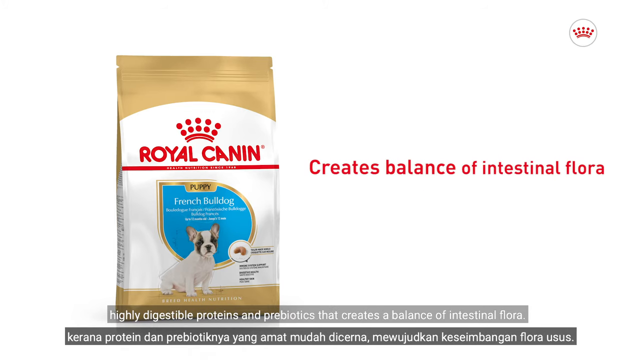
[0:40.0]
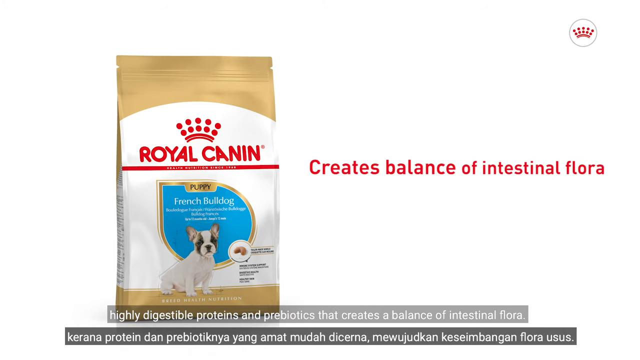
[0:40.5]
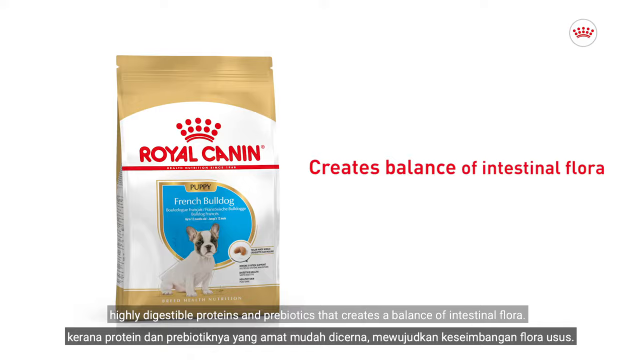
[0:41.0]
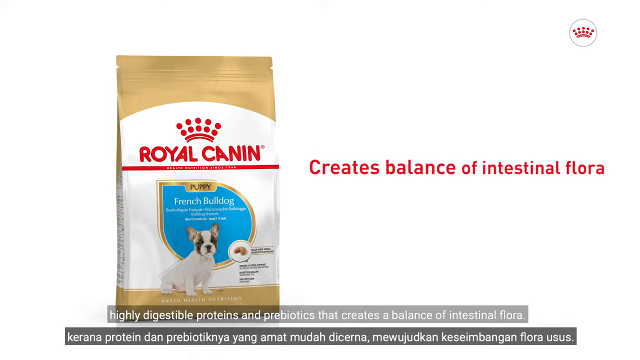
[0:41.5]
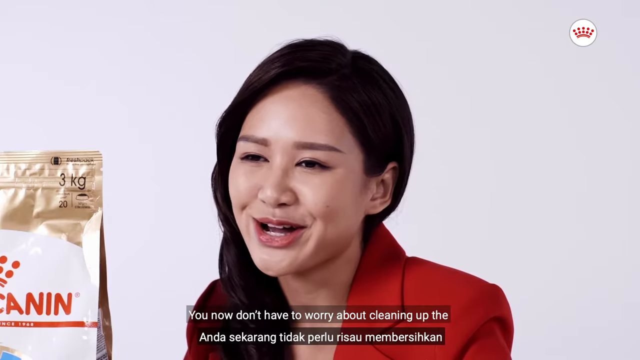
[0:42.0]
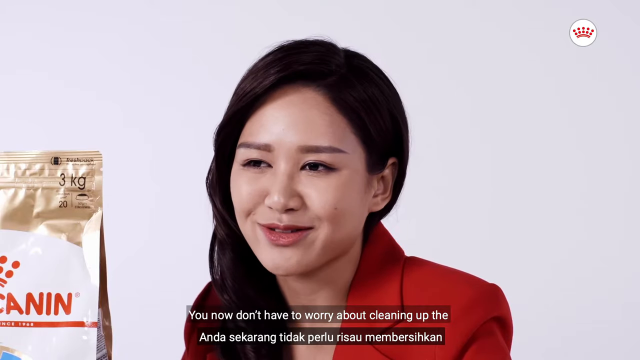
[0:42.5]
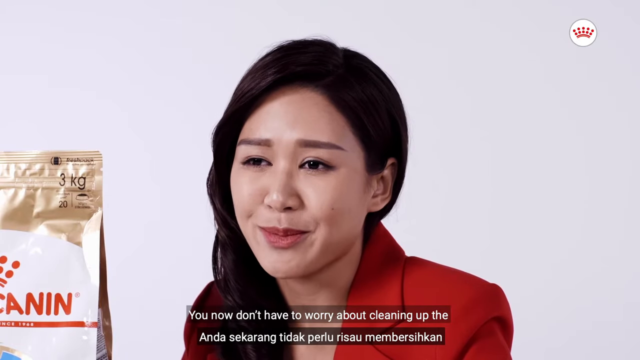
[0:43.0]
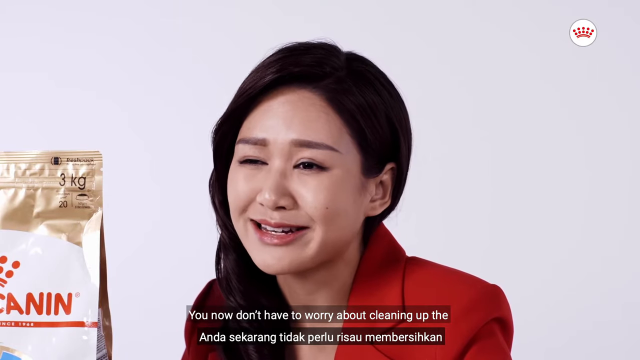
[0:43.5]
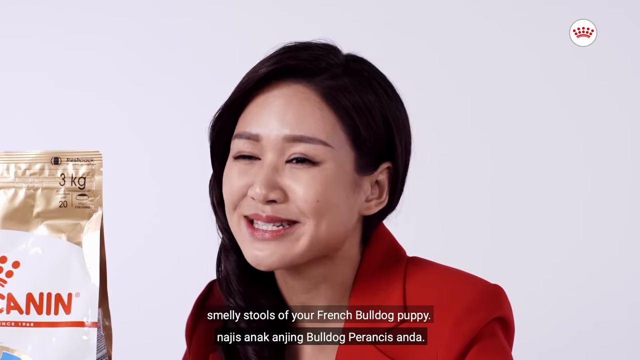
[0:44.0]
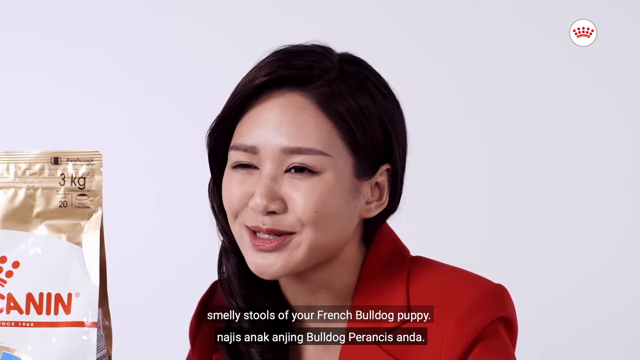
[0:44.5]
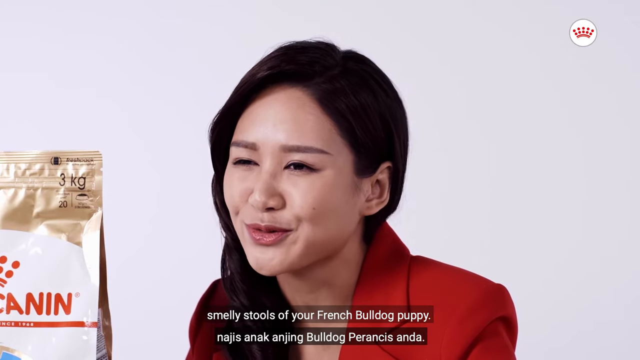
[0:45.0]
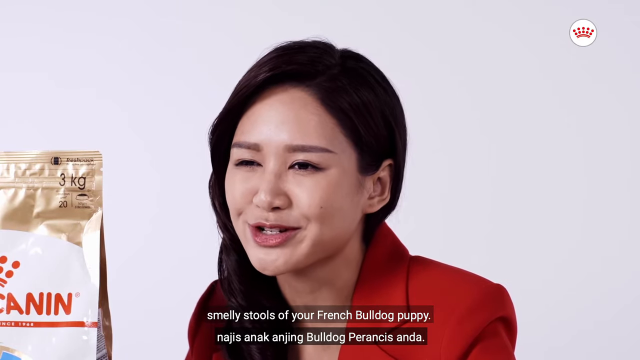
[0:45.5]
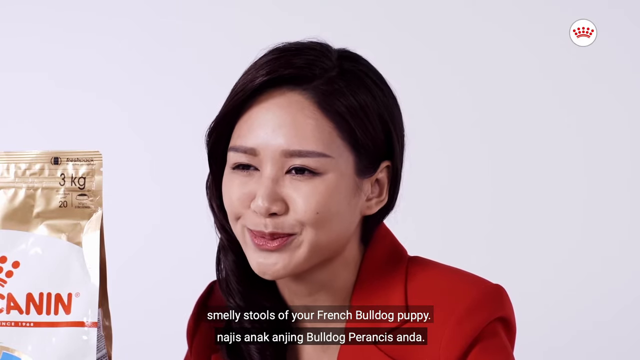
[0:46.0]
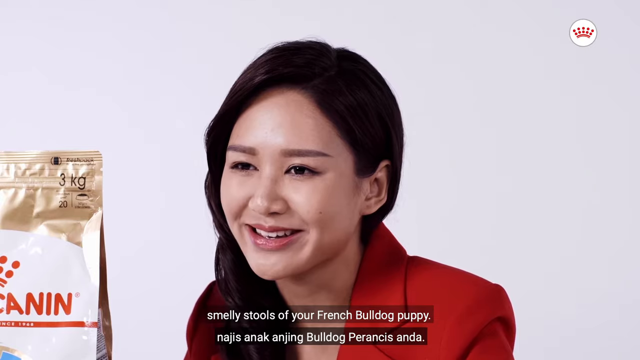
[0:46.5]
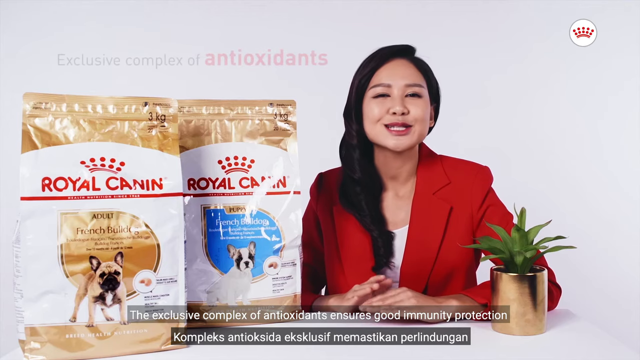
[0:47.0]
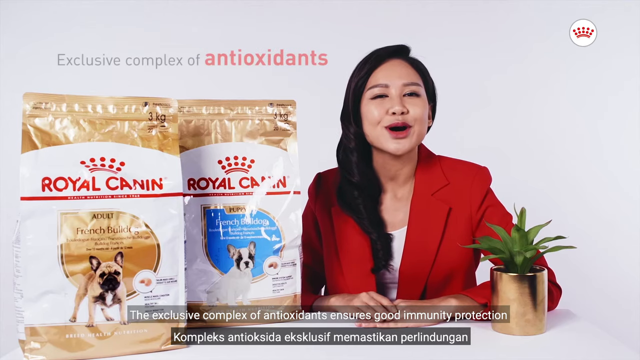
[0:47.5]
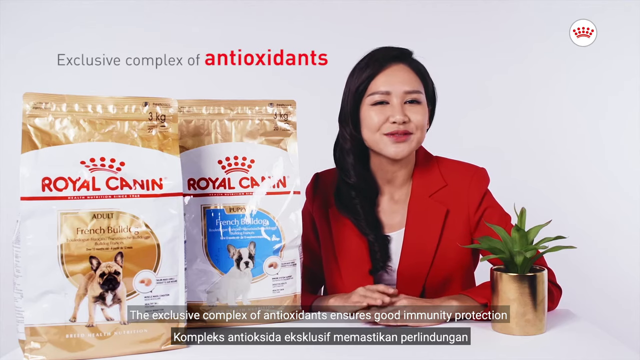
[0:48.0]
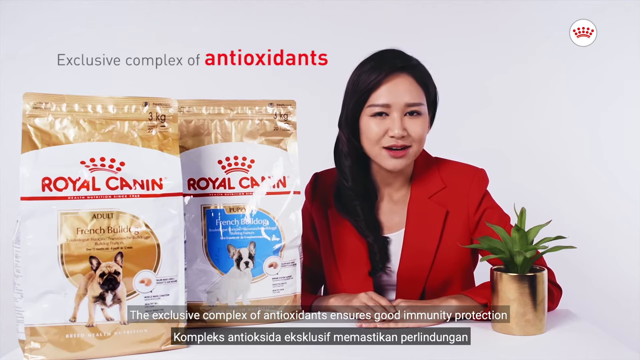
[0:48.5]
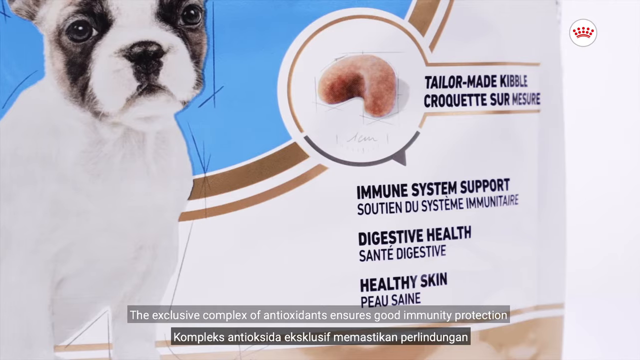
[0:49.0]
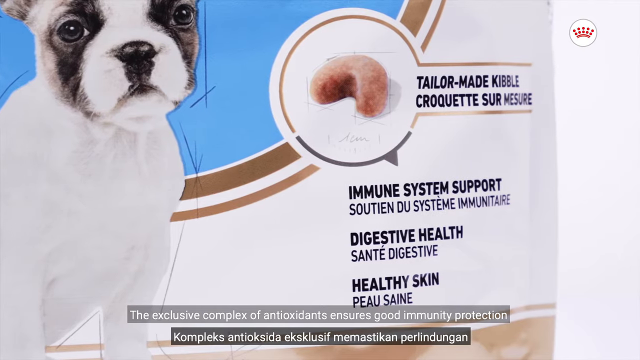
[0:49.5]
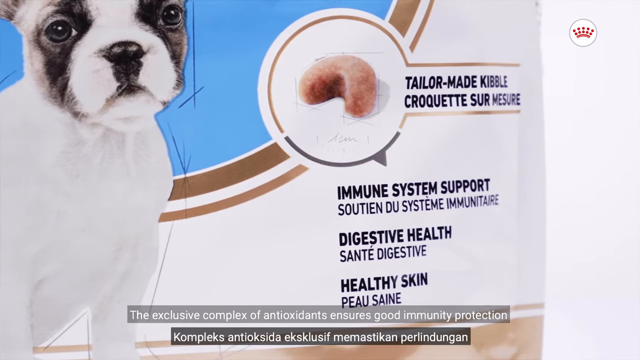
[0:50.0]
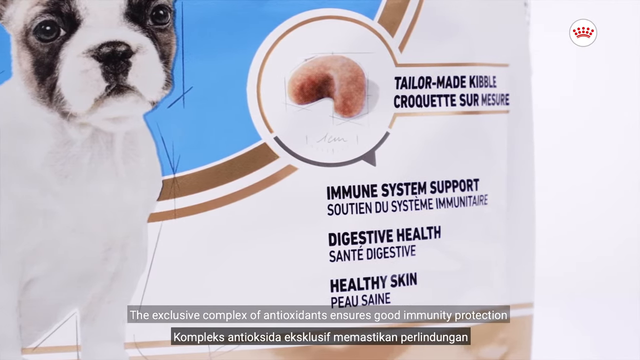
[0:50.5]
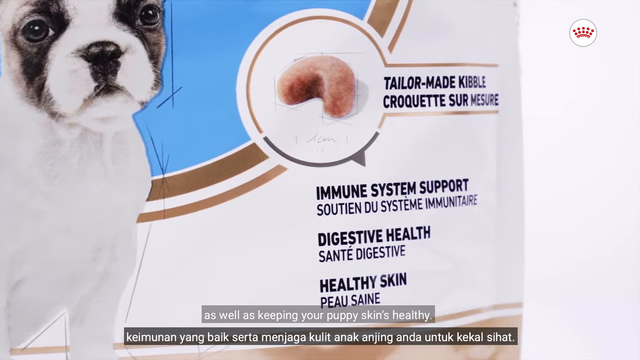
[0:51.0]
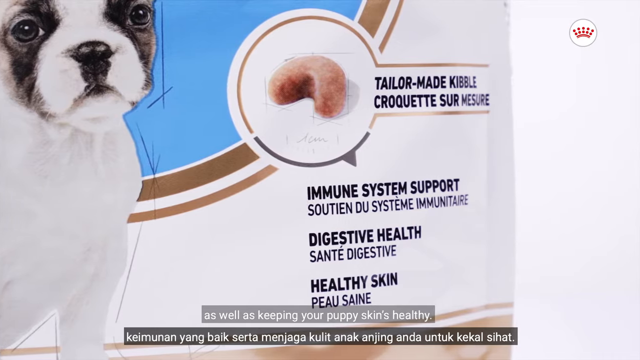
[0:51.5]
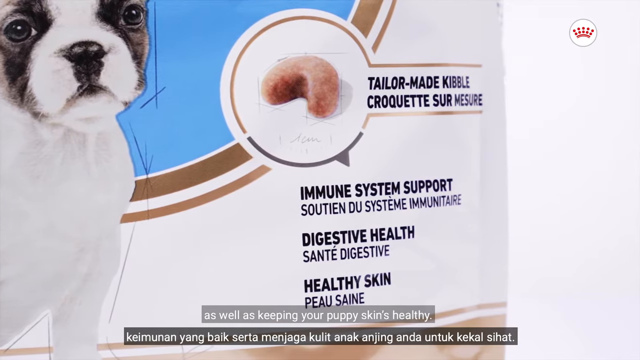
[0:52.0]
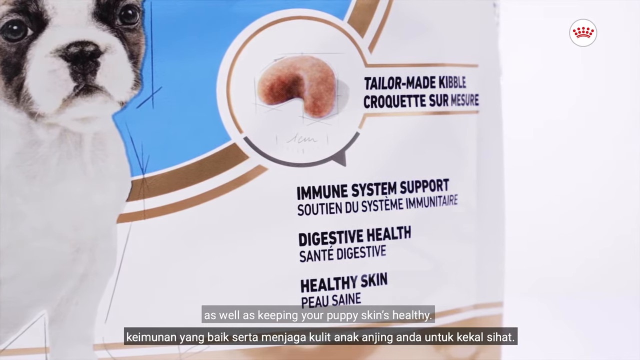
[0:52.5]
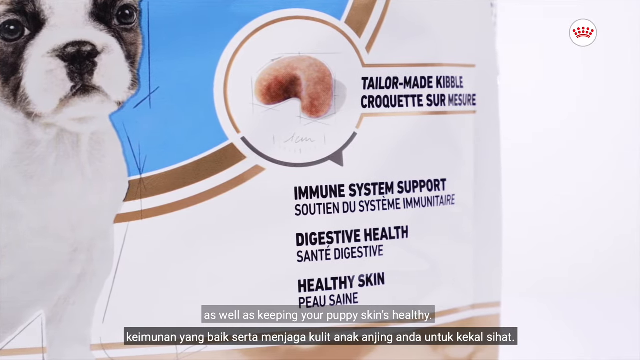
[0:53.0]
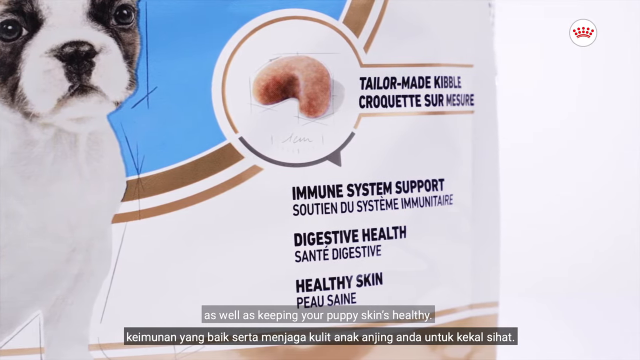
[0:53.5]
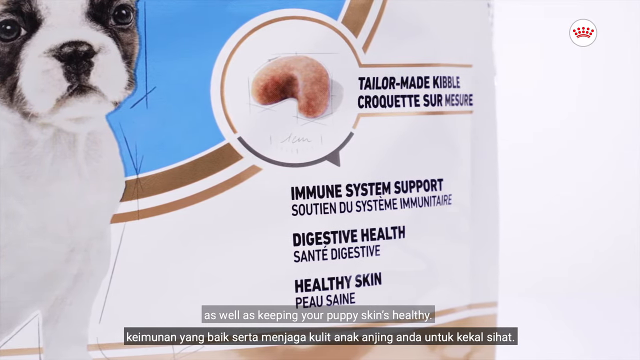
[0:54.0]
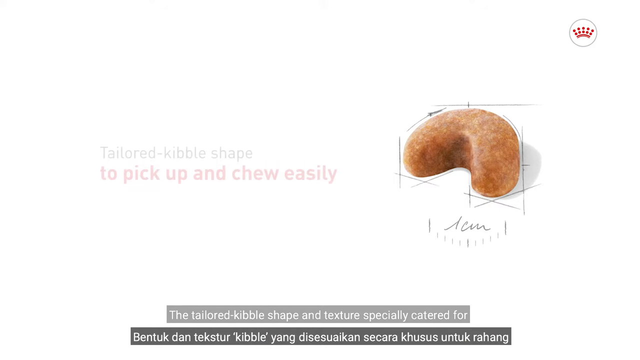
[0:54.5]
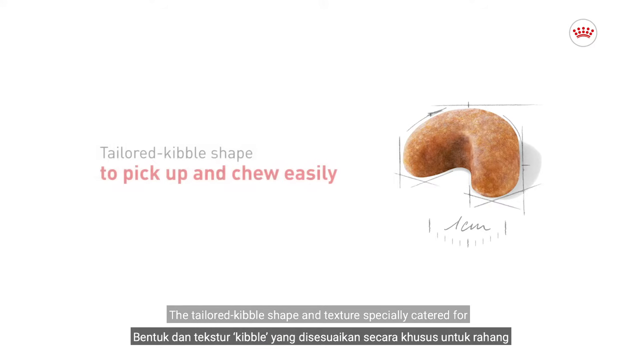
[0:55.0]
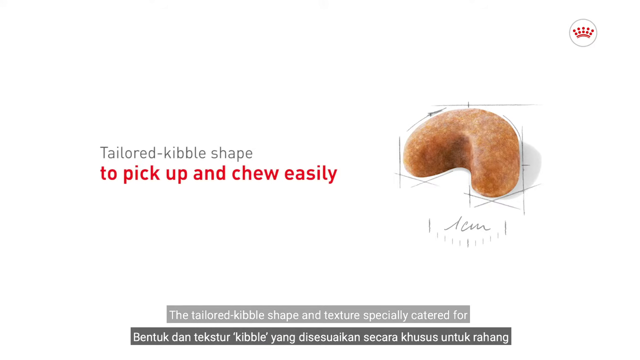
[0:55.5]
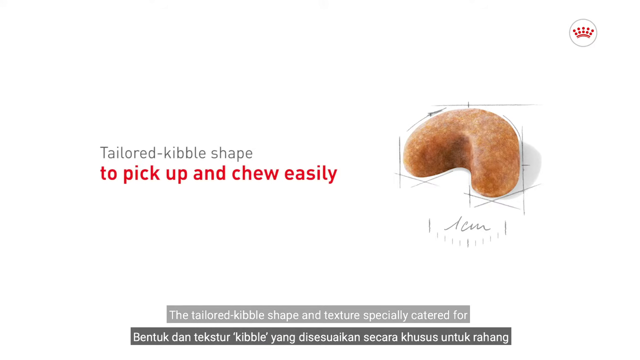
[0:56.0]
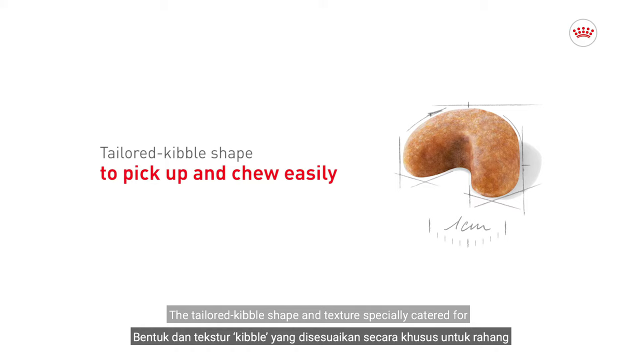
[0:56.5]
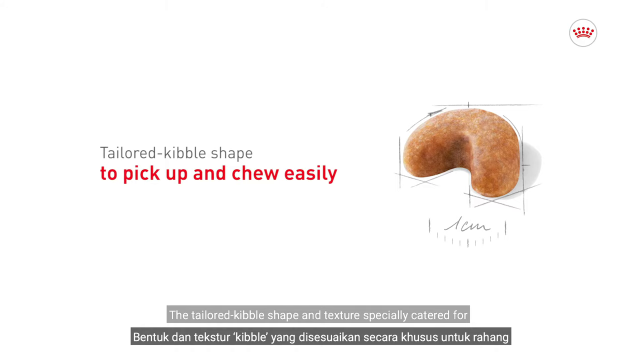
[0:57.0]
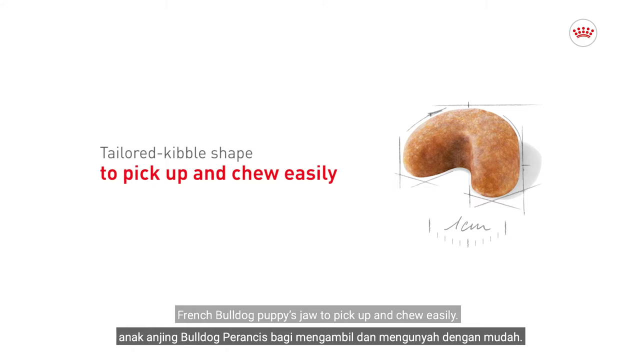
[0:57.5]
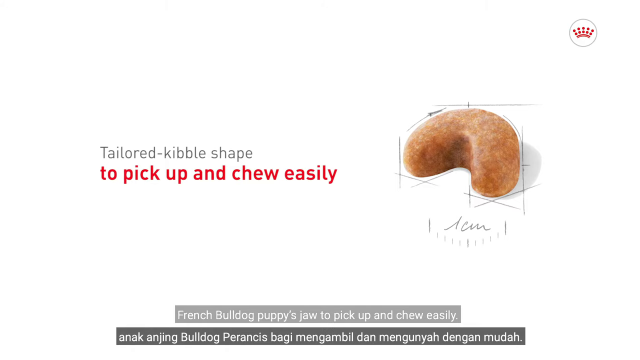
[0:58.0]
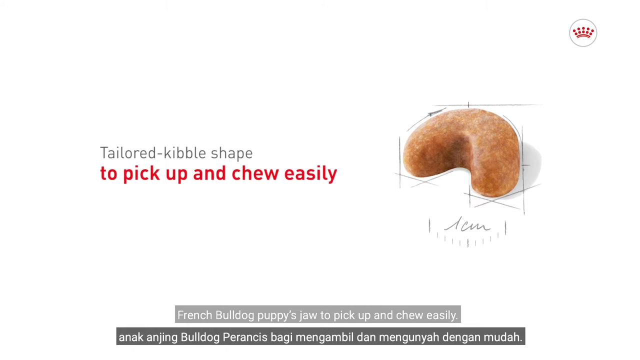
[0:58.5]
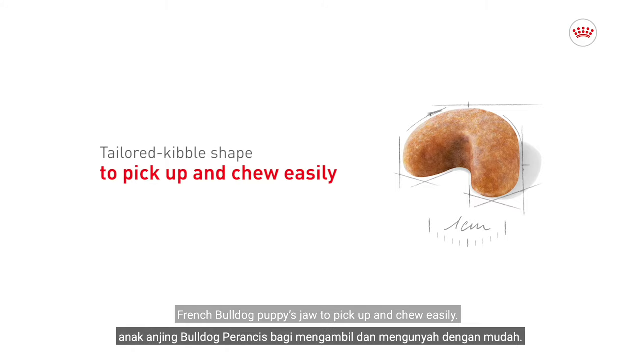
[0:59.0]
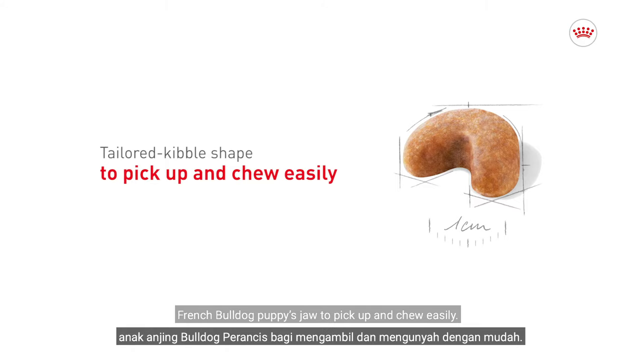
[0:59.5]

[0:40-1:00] A bag of French Bulldog dog food is shown on the left, and to the right, in red text against a white background, is the statement "creates balance of intestinal floral". The Royal Canin logo is in the upper right-hand corner. The video switches back to the Asian woman speaking and smiling toward the camera, her words translated or displayed in English subtitles at the bottom of the screen. She has a clear complexion and dark black hair, and she makes a somewhat awkward smile; her lips look a little strange. Various features of the dog food are displayed on the screen.